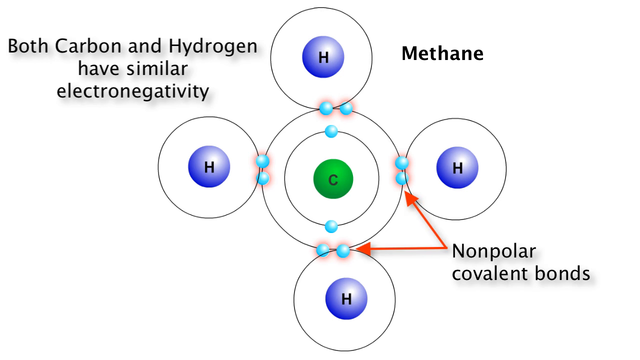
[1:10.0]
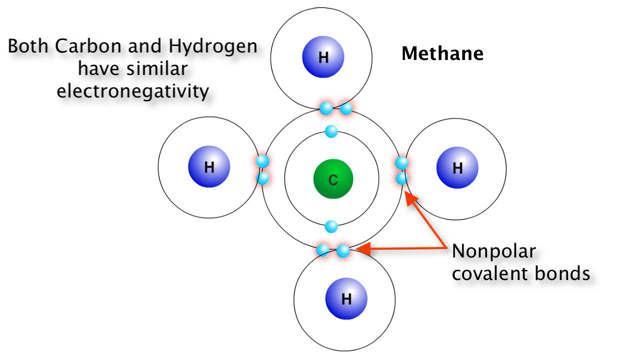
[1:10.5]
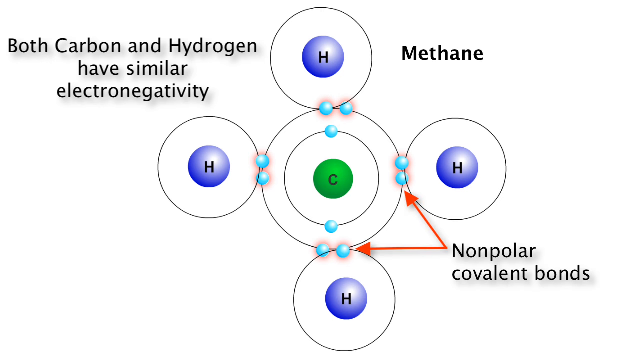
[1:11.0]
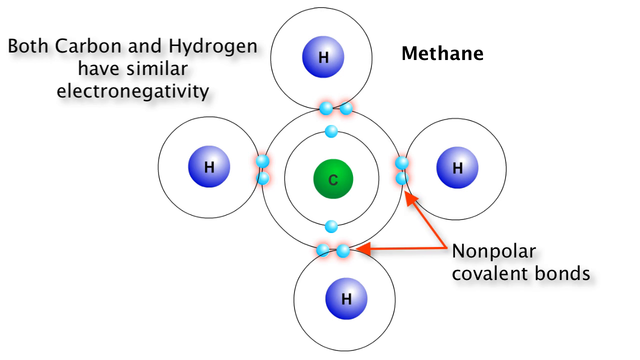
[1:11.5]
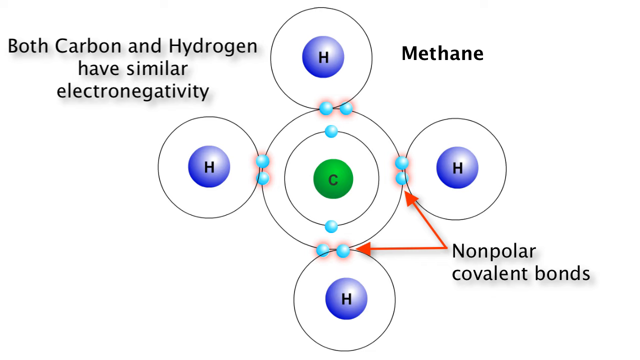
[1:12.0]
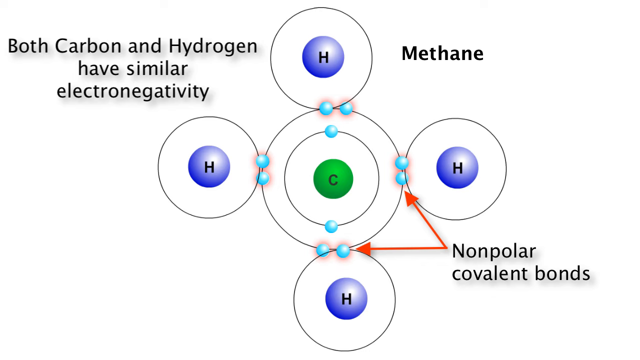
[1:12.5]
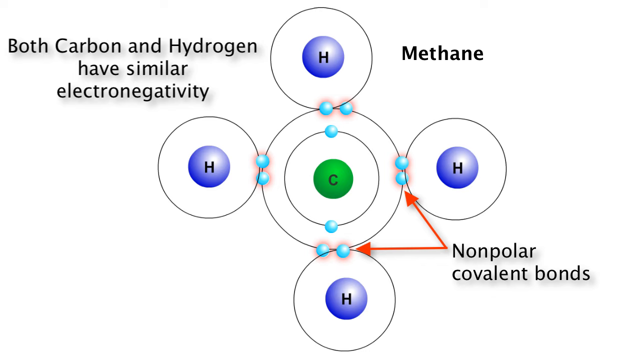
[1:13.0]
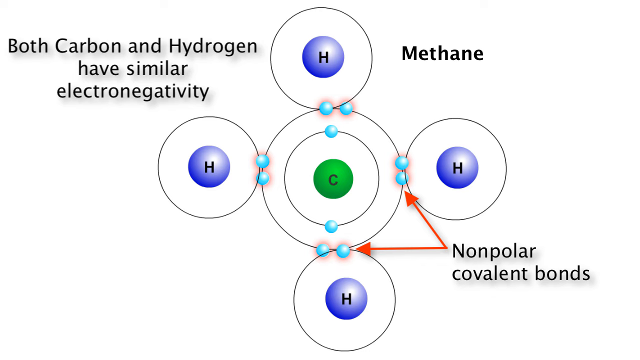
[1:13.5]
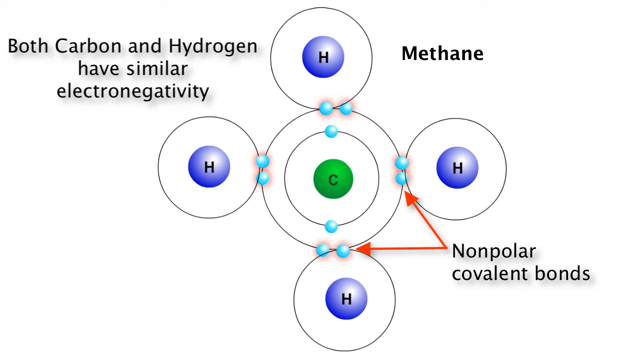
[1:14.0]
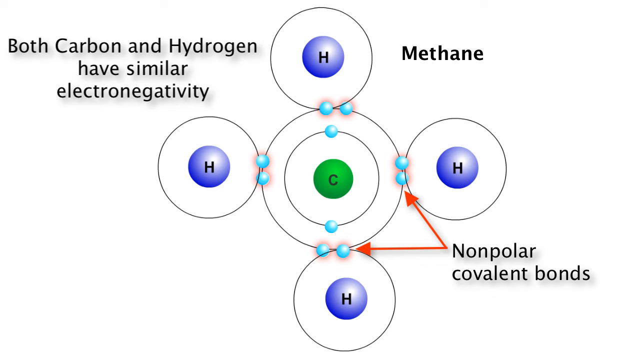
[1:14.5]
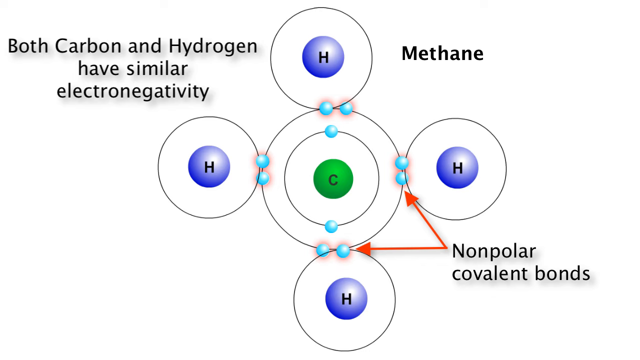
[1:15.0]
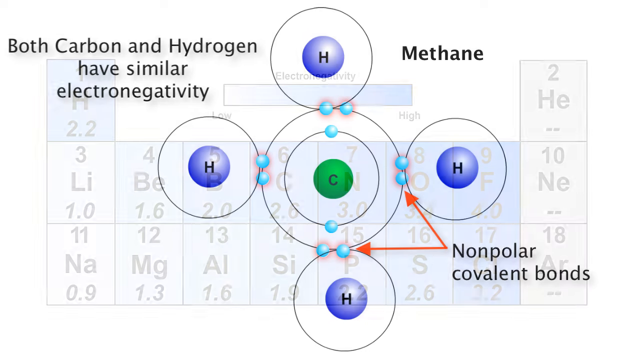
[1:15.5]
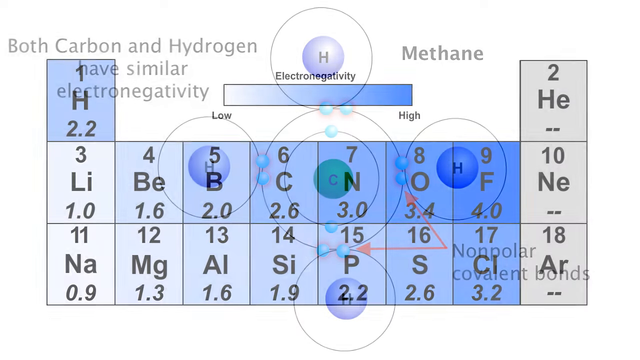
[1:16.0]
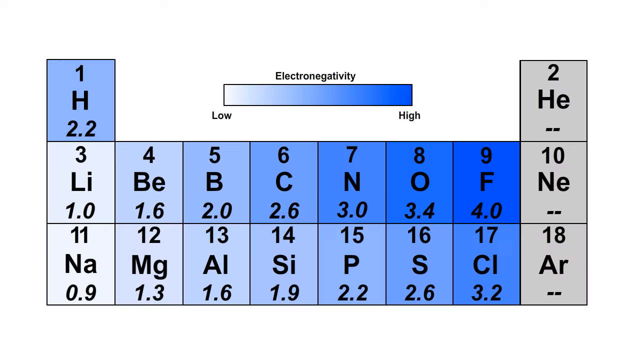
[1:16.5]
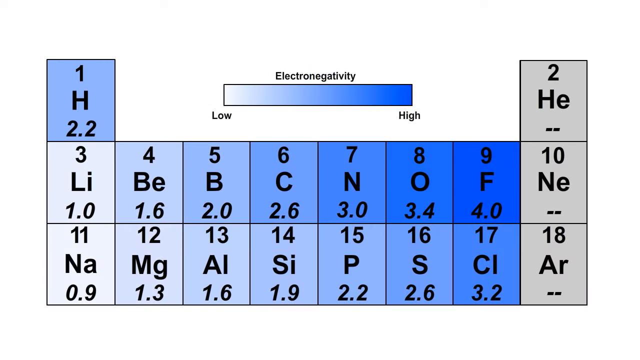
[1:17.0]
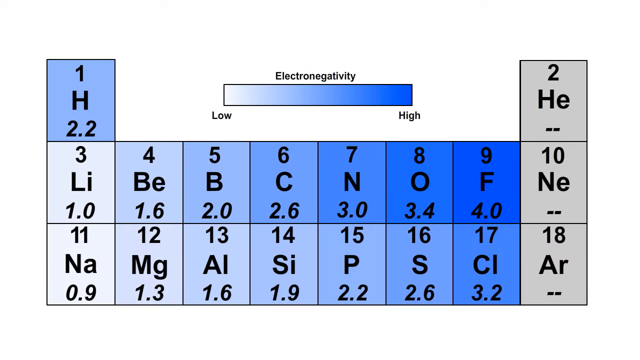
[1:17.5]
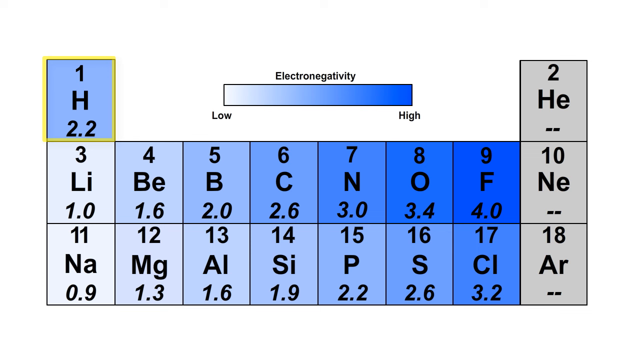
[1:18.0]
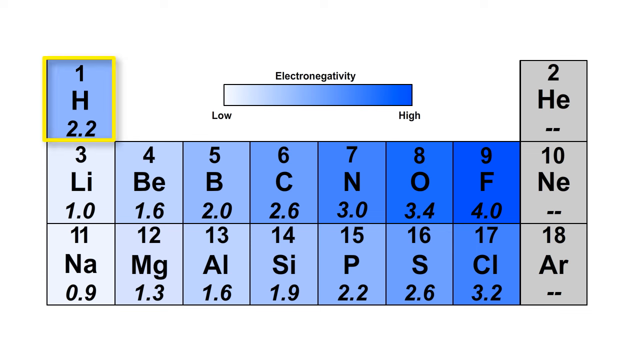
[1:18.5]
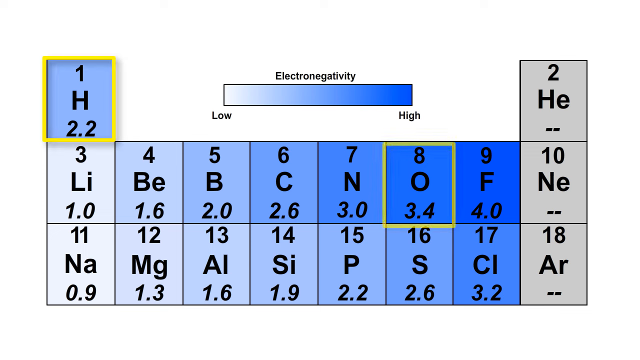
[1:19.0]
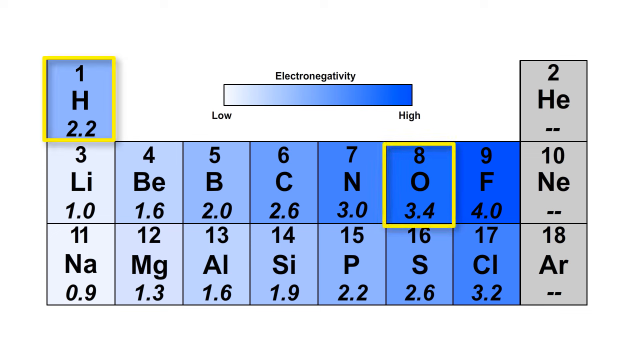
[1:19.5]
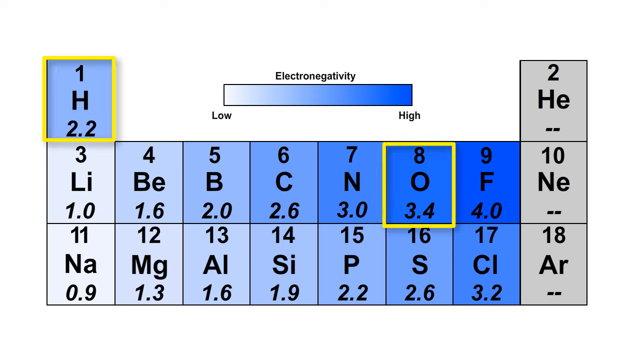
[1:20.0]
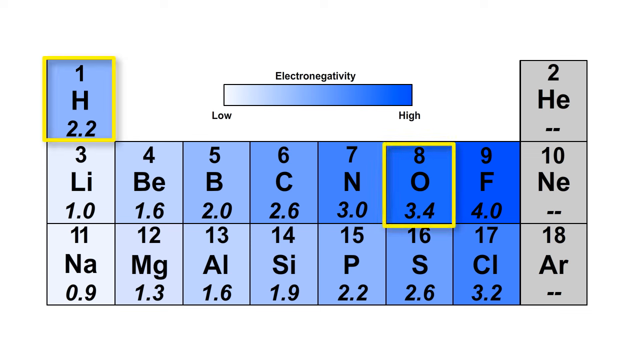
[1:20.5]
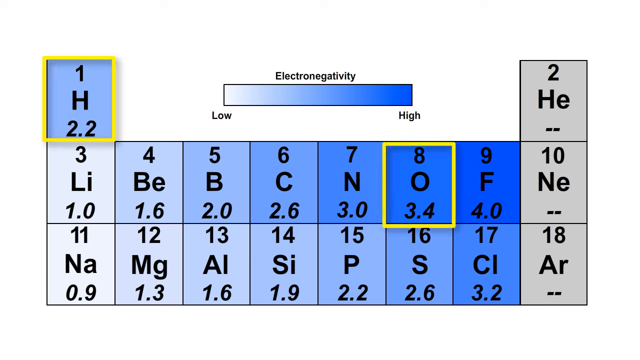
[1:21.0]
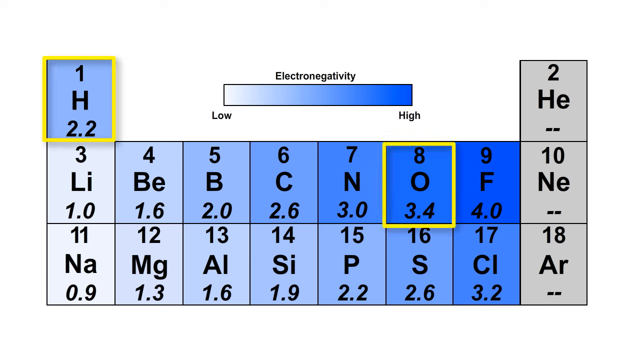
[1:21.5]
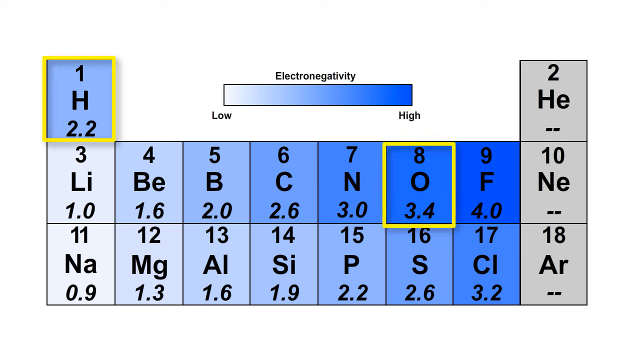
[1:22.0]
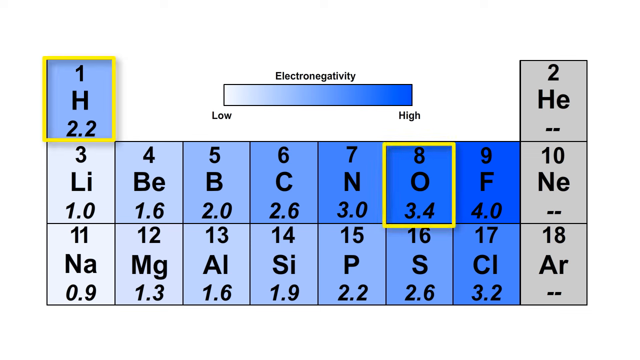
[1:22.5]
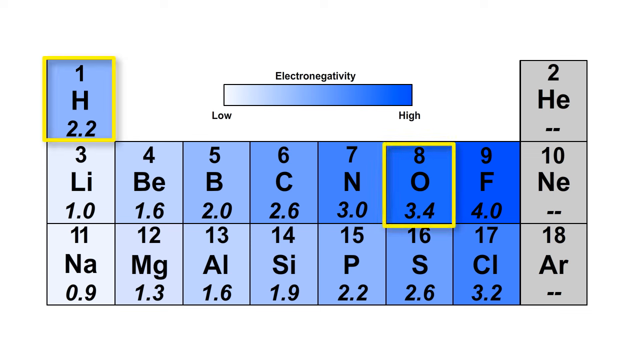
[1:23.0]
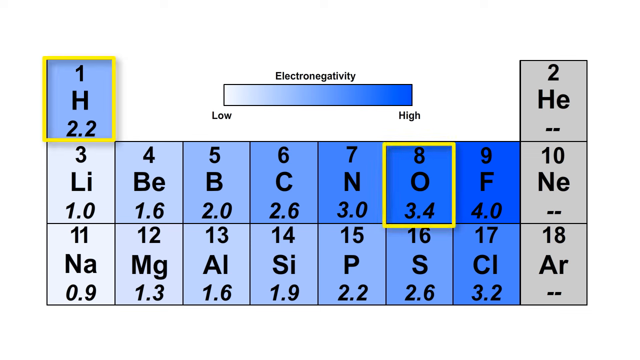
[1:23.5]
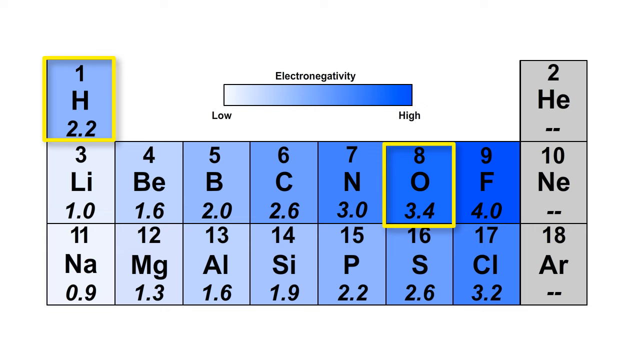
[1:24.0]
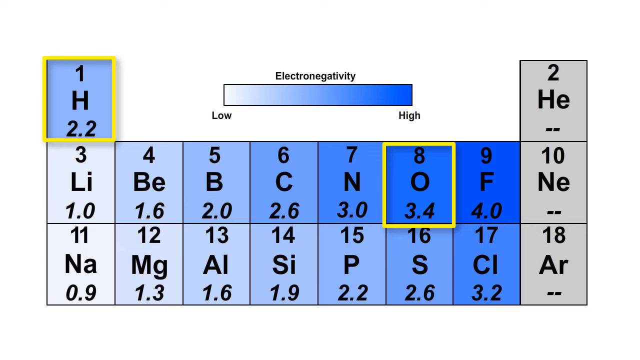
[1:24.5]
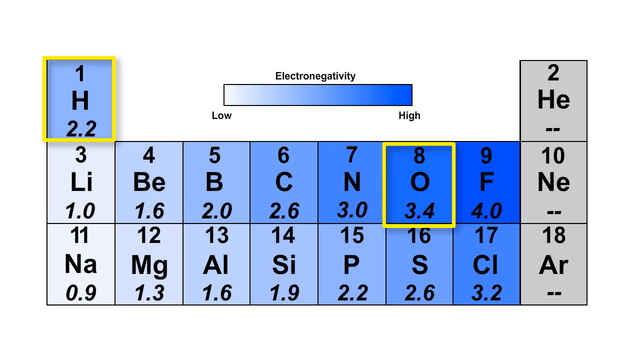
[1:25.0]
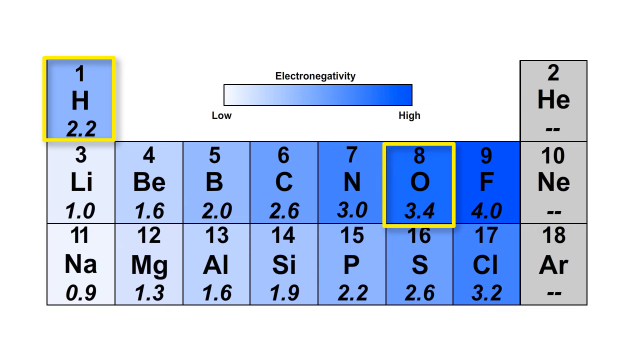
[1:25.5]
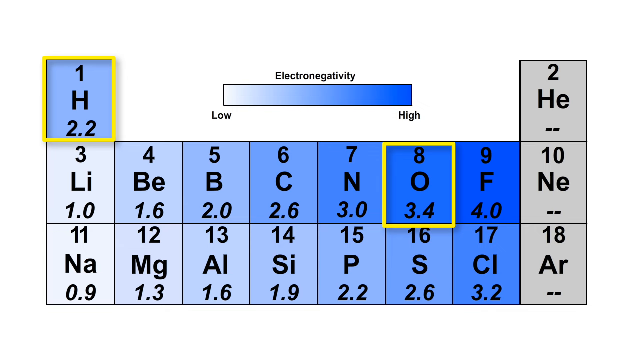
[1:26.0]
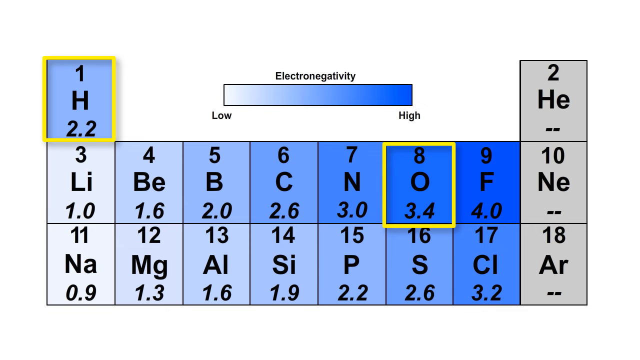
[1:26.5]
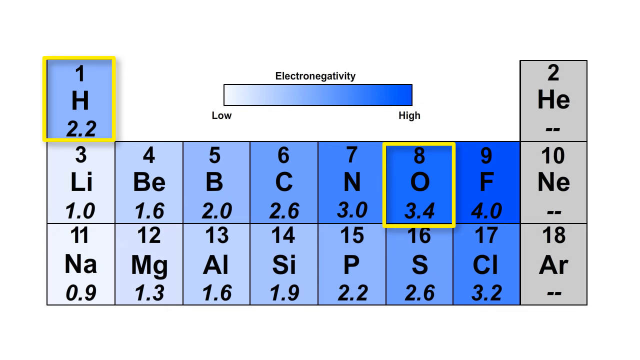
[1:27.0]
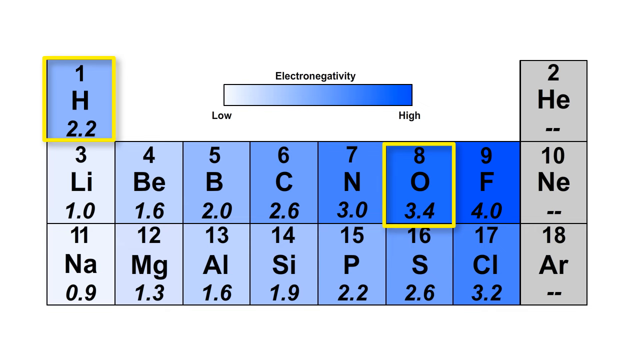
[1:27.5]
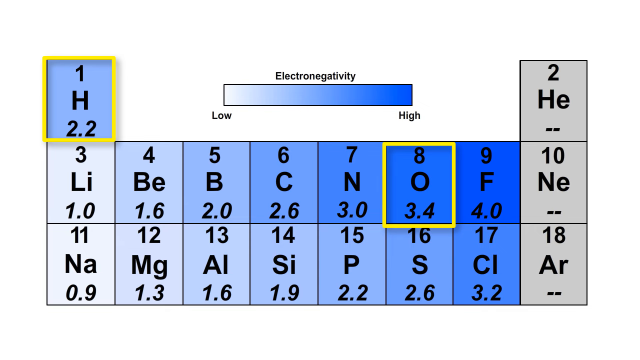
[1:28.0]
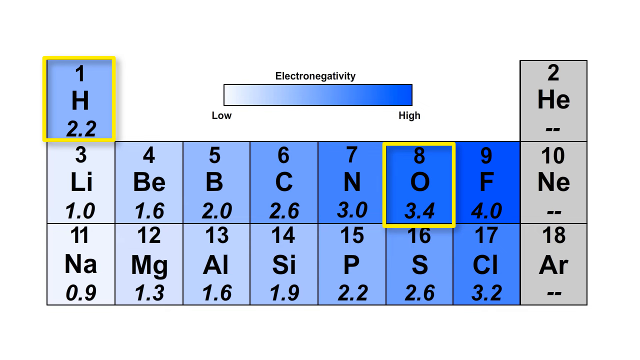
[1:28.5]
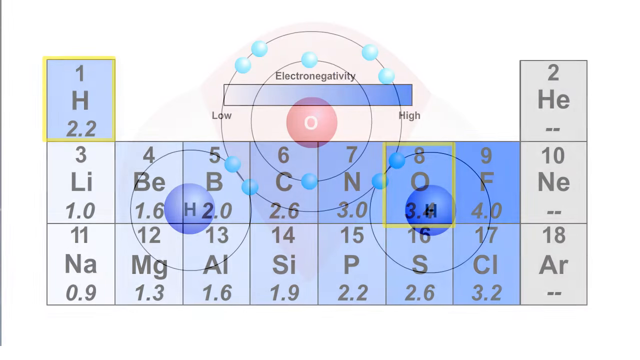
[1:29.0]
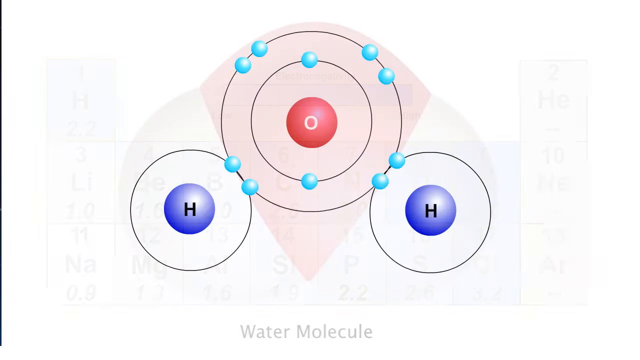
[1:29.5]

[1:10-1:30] The methane diagram shows the carbon as a blue sphere in the middle ringed by concentric black circles, with the hydrogens as purple spheres marked H. The upper left reads "both carbon and hydrogen have similar electronegativity", and the lower right reads "non-polar covalent bonds", with red arrows pointing at the blue spheres connecting the right-hand and lower hydrogens to the carbon. The view returns to the element diagram with the gray-to-dark-blue gradient for low-to-high electronegativity, each box a different shade of gray or blue. Hydrogen is outlined in yellow again, and this time oxygen is also outlined in yellow; oxygen is a slightly darker blue and labeled 3.4. The diagram disappears and is replaced by oxygen in the middle, framed by concentric black circles that apparently represent electron shells. The oxygen is a blue sphere with a white letter O. The hydrogens are purple balls, each with a black H, positioned below the oxygen, one on the left and one on the right, each connected to the oxygen by two blue spheres. The oxygen has a kind of light red triangular wedge shape around it, and the hydrogens have a kind of gray gradient outline underneath them.